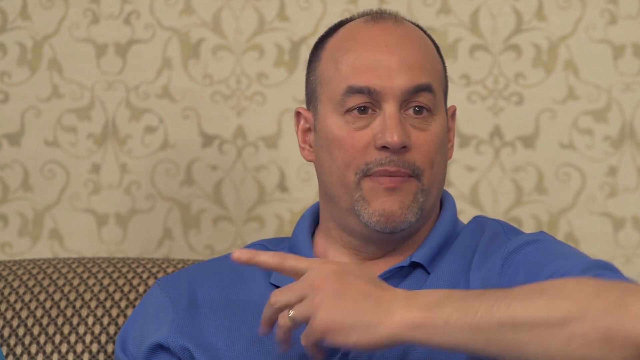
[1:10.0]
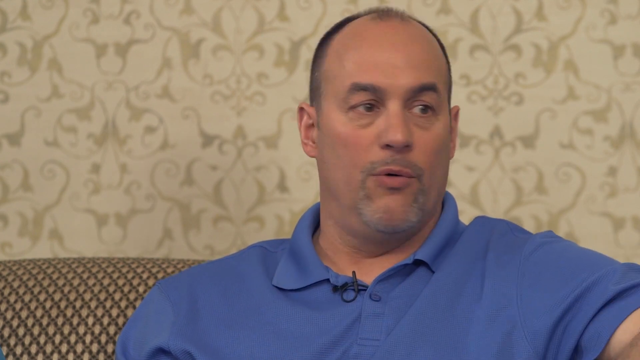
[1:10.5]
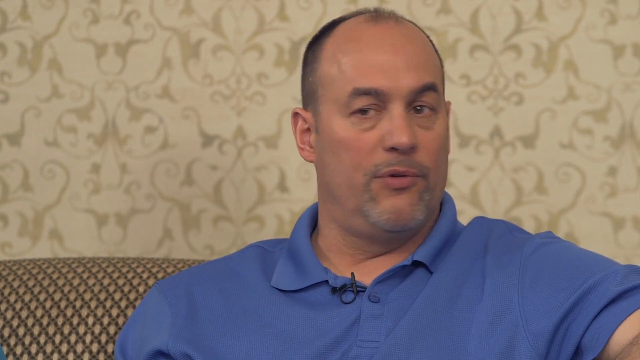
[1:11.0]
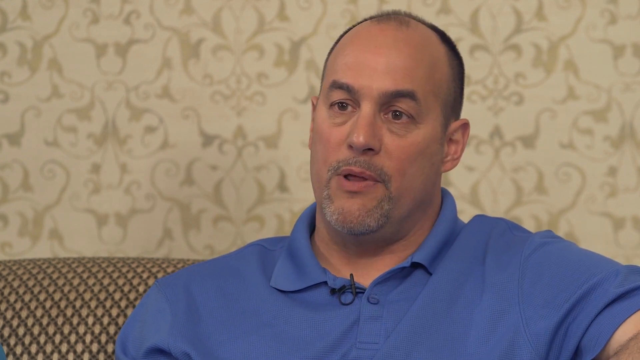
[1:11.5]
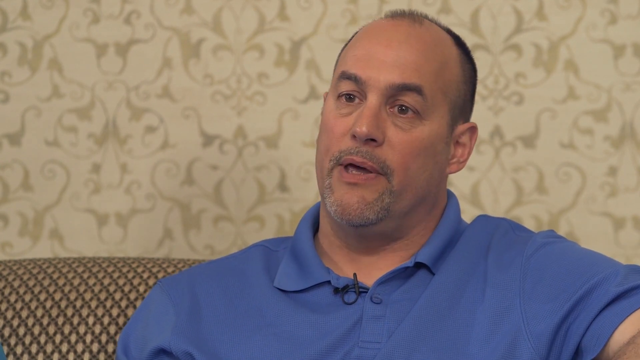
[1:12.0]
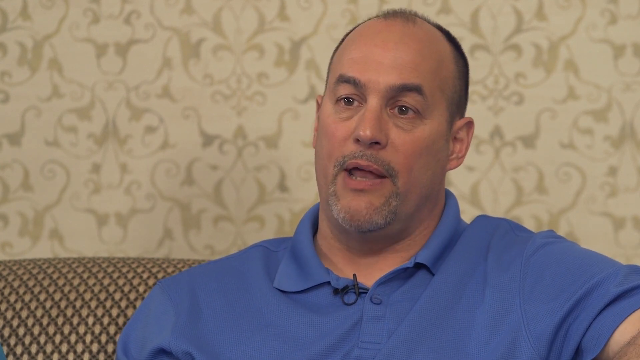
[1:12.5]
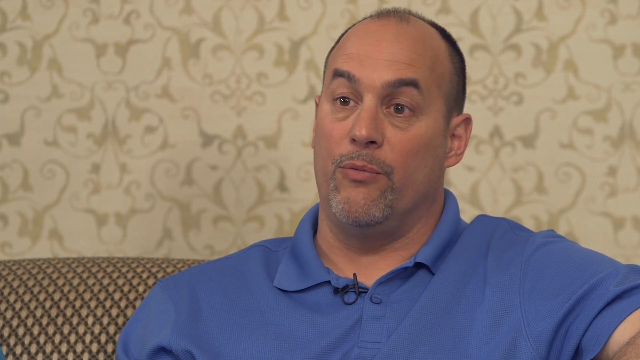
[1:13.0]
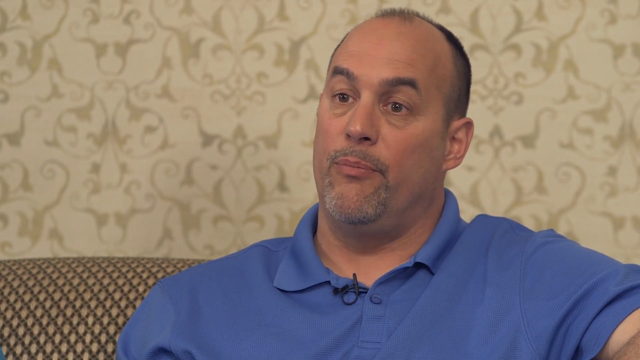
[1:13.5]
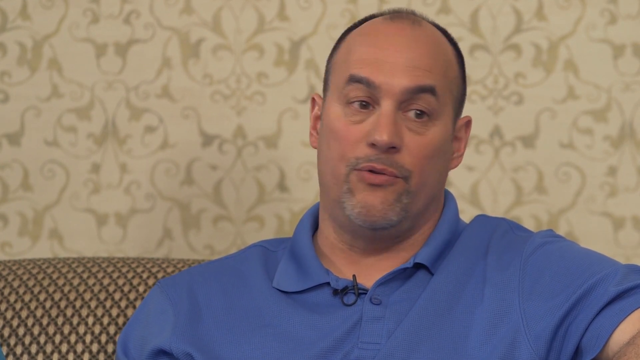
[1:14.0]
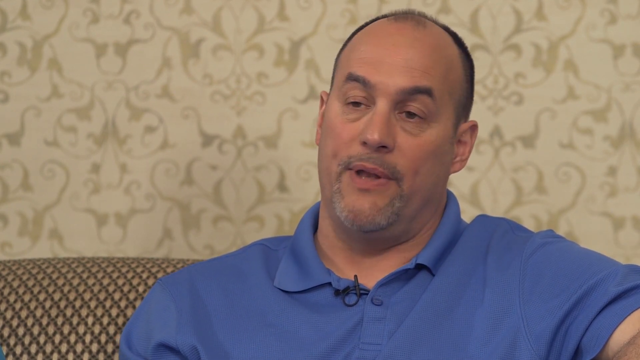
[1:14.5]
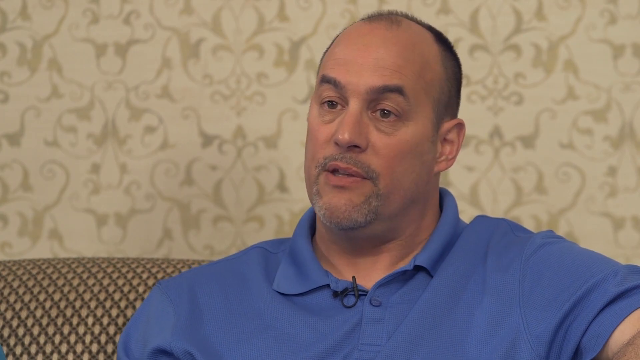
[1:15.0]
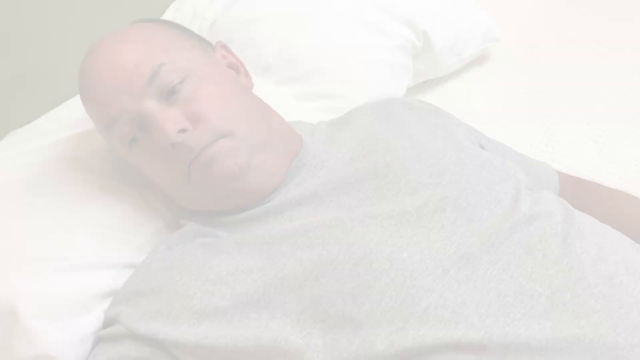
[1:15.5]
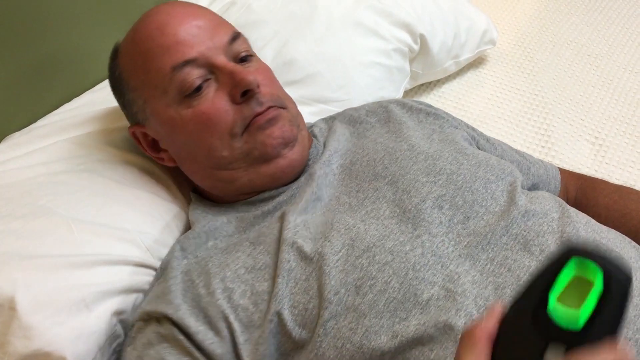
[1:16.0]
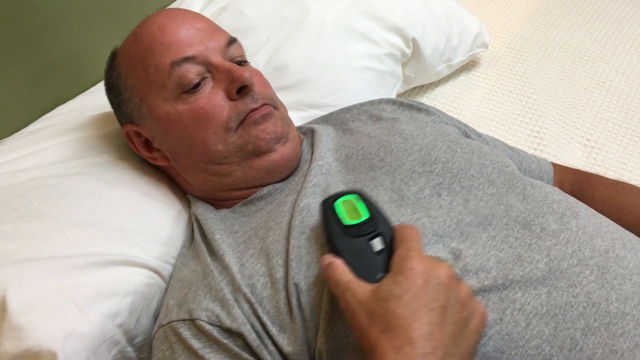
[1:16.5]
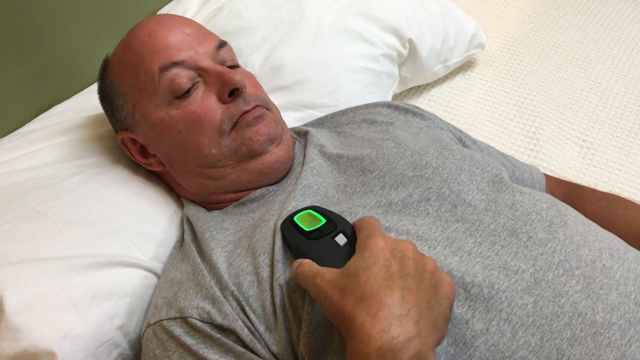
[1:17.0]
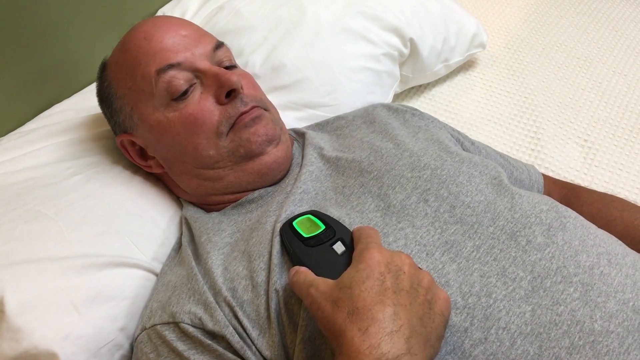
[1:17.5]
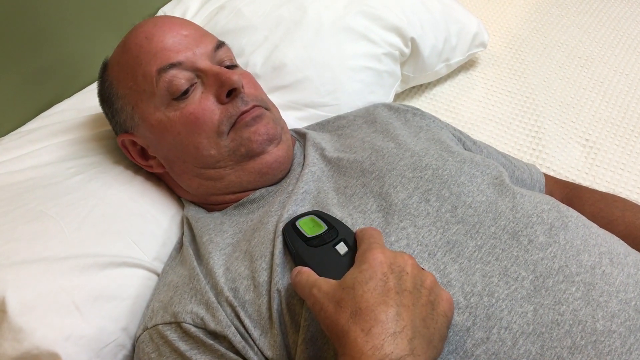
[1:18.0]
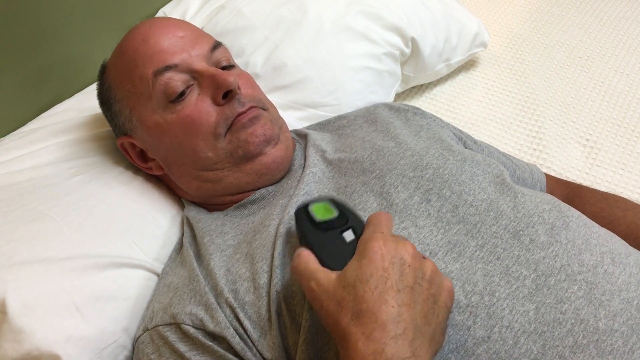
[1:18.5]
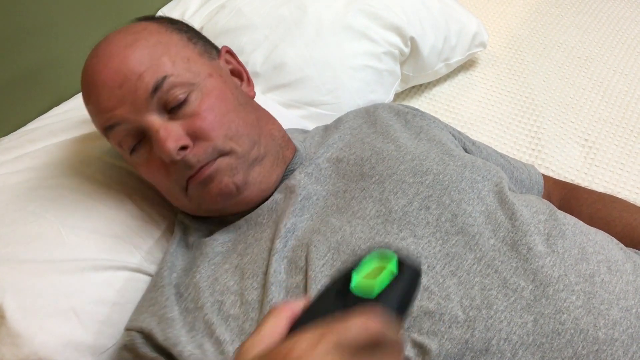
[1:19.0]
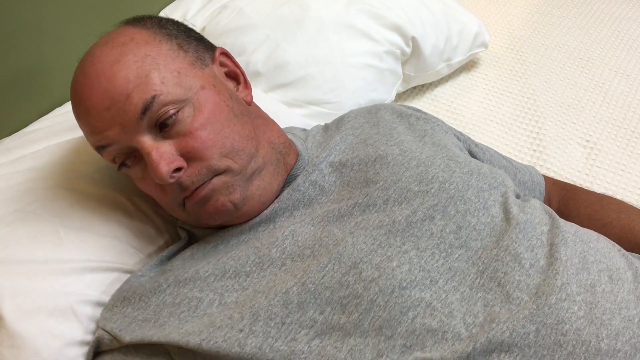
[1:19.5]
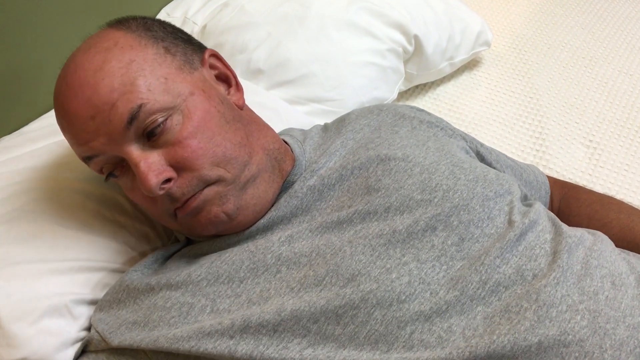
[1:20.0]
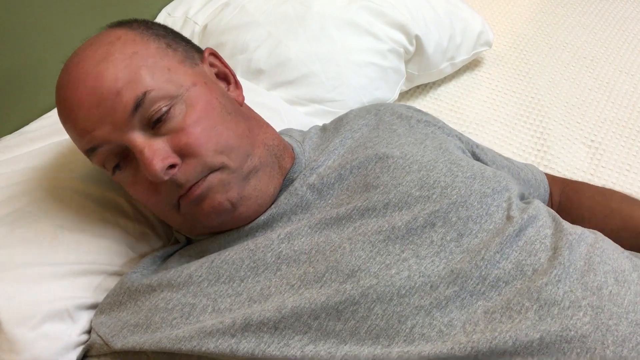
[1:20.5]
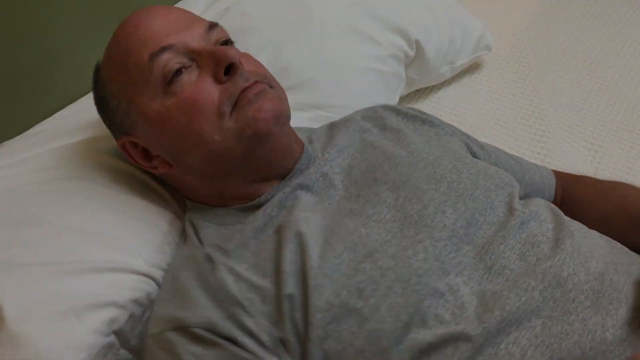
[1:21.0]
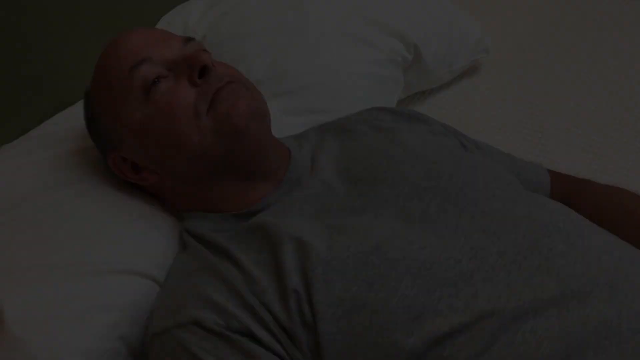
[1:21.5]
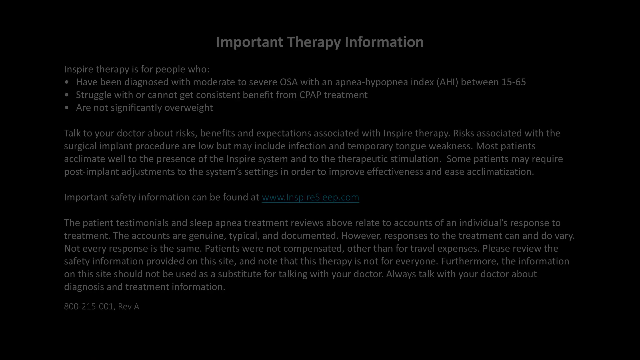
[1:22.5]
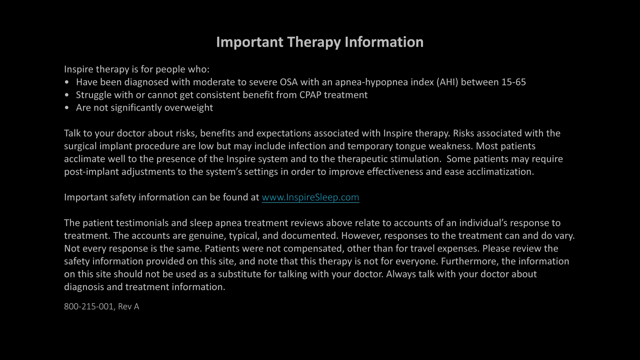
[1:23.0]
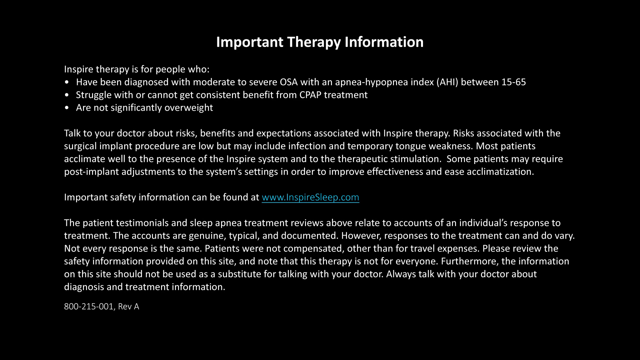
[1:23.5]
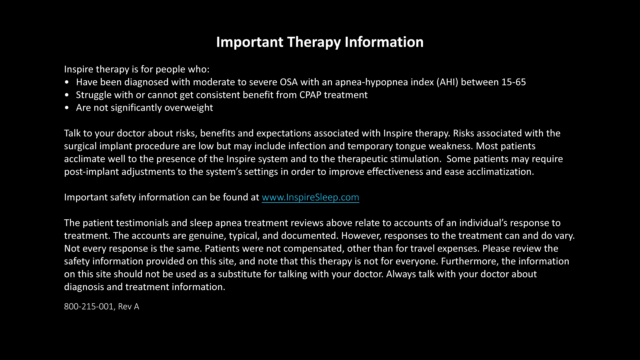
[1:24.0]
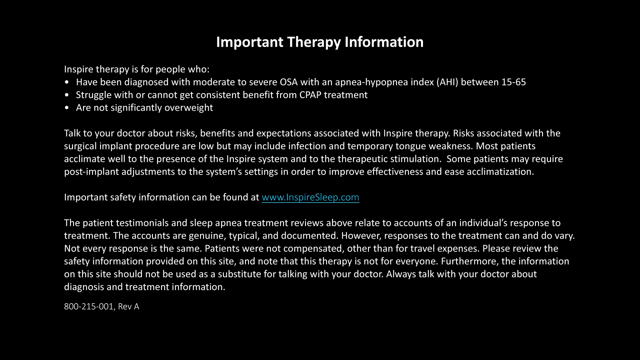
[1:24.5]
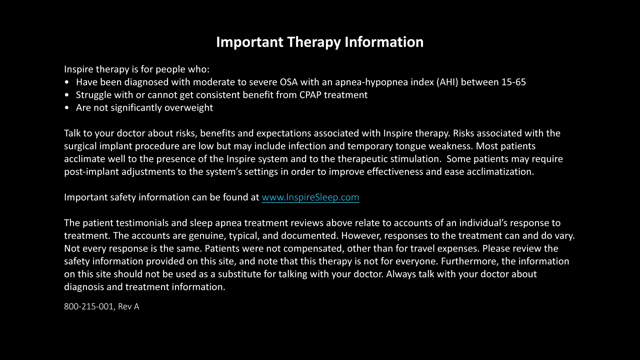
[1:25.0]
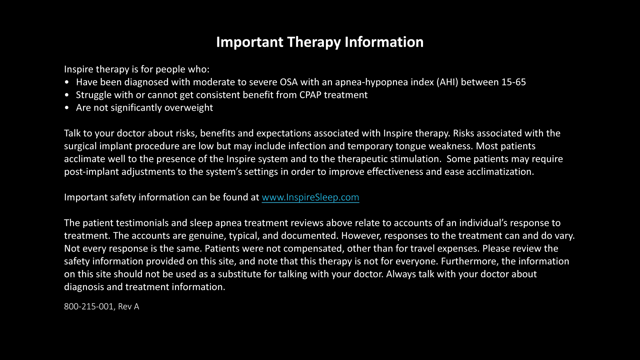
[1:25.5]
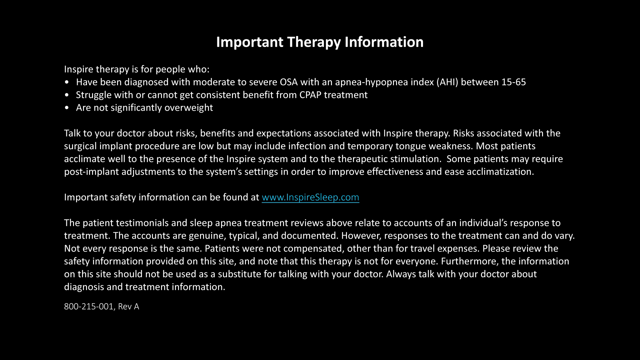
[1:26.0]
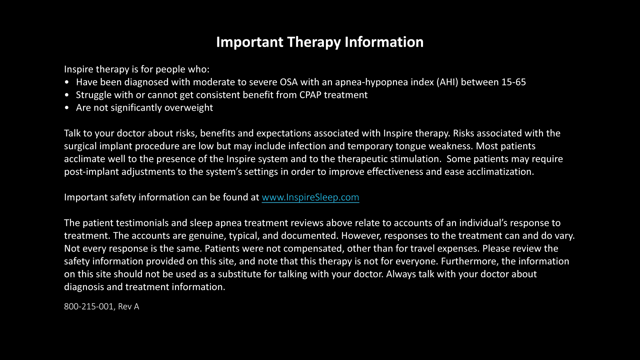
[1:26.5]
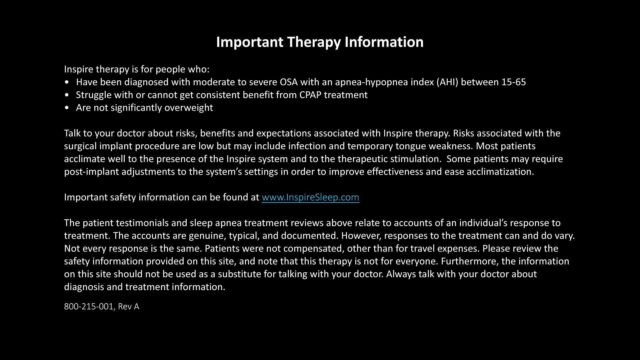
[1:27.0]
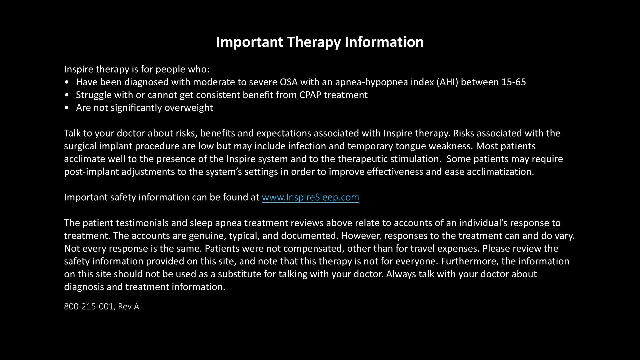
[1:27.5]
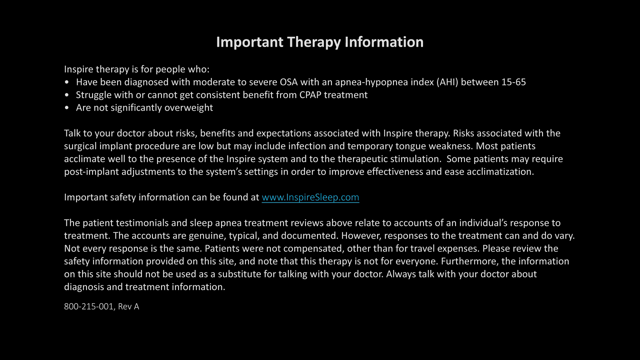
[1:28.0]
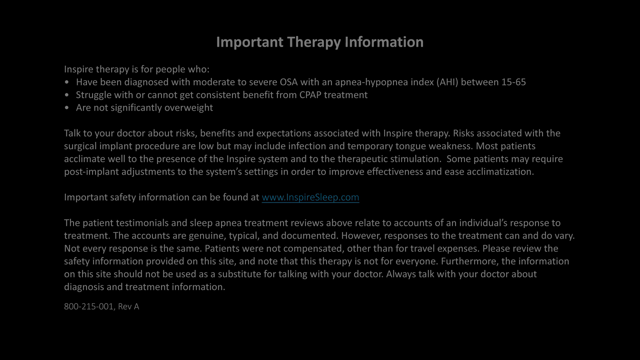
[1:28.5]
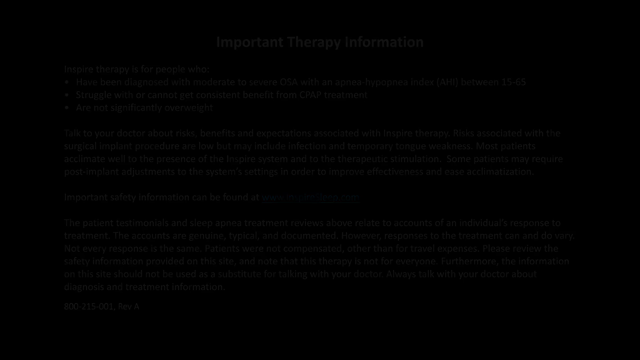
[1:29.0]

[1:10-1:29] Dan speaks, occasionally looking to his left side and shaking his head slightly as he talks. He has some facial hair, strong eyebrows, eyebags and a long face. The next shot shows the same man who was using the device before, still lying down. He puts the device onto his chest, the light flashes green, and he puts it off to the side. He looks over, then looks up toward the ceiling and goes back to his original position. The video ends with a screen of important therapy information stating that Inspire therapy is for people who are diagnosed with OSA, struggle with or cannot get consistent benefit from CPAP treatment, or are not significantly overweight, and pointing to more safety information on the inspiresleep.com website. Other paragraphs on the screen mention the testimonials and the treatment, ask viewers to review the safety information, and advise talking to a doctor about diagnosis and treatment information.